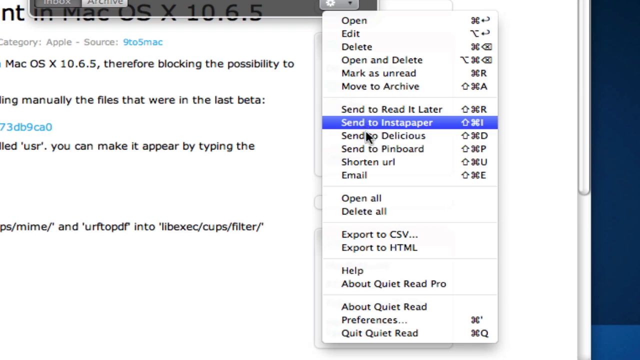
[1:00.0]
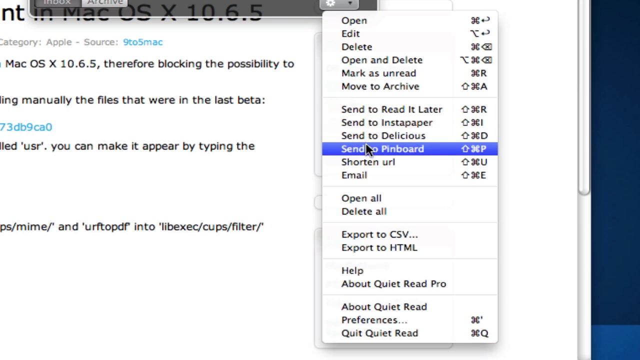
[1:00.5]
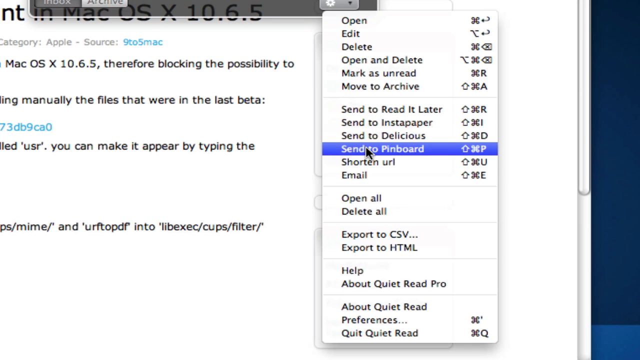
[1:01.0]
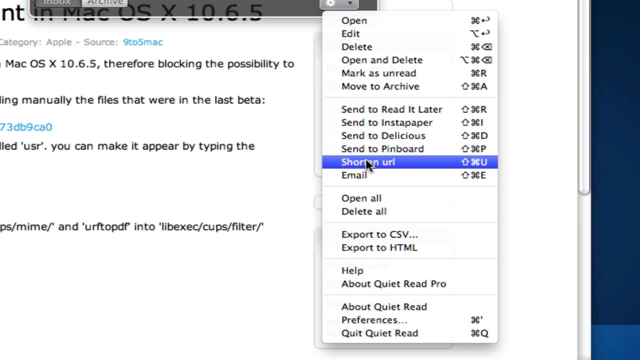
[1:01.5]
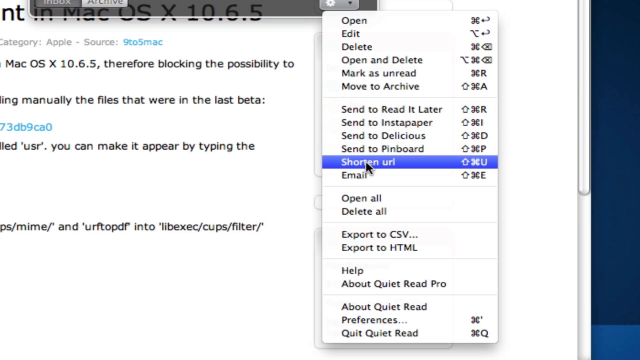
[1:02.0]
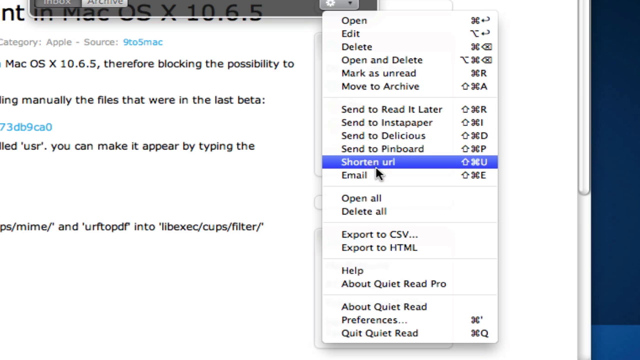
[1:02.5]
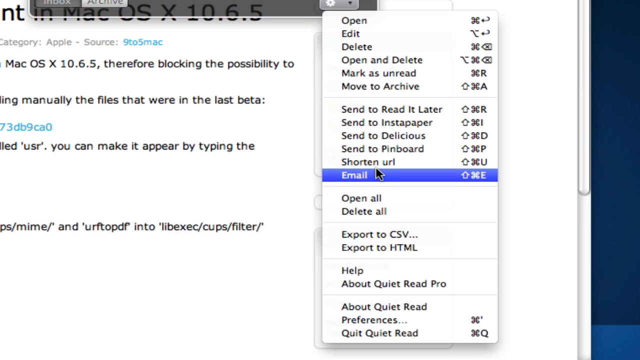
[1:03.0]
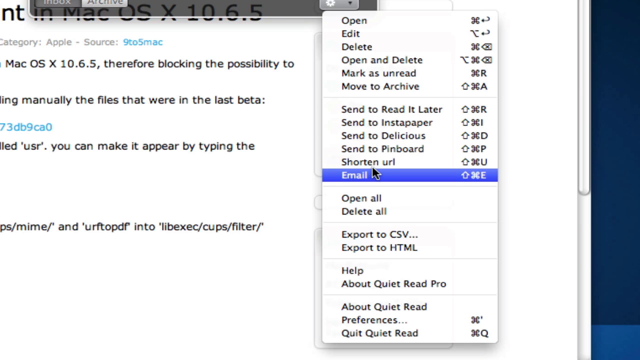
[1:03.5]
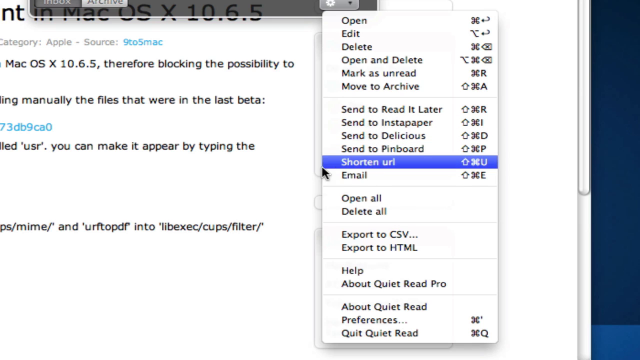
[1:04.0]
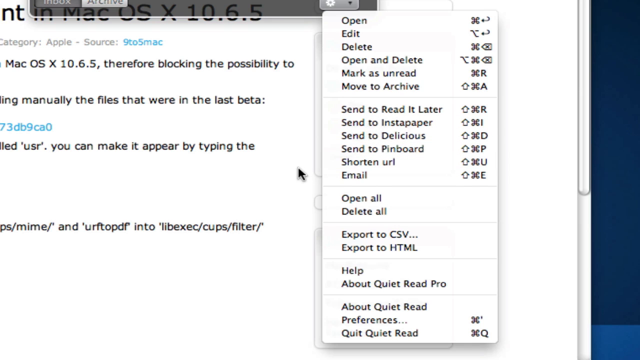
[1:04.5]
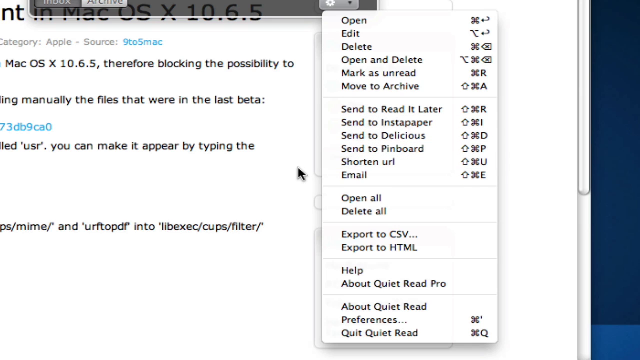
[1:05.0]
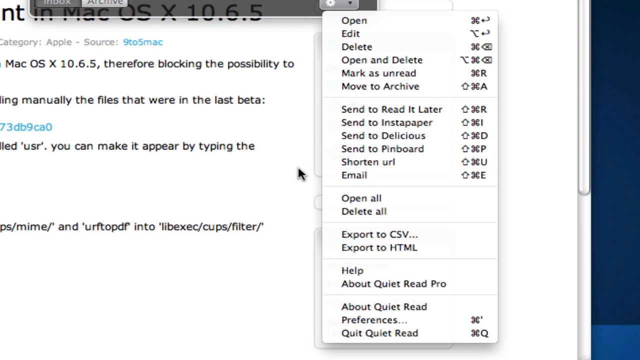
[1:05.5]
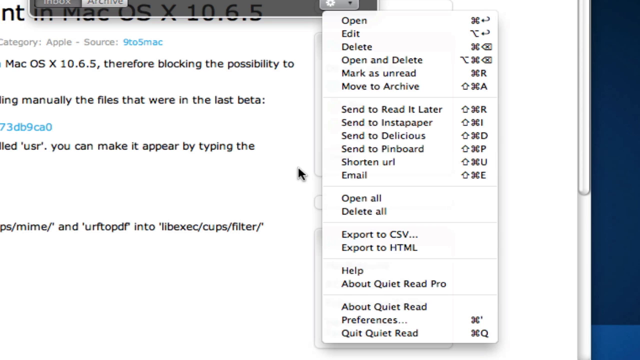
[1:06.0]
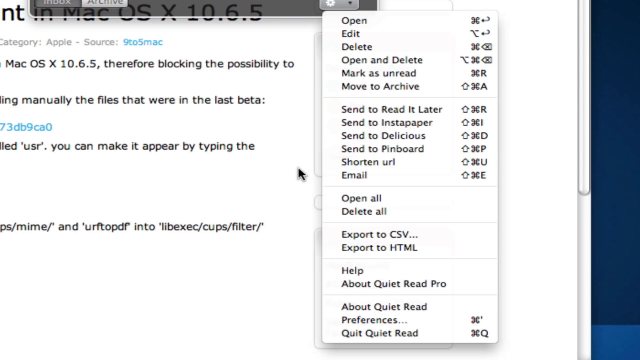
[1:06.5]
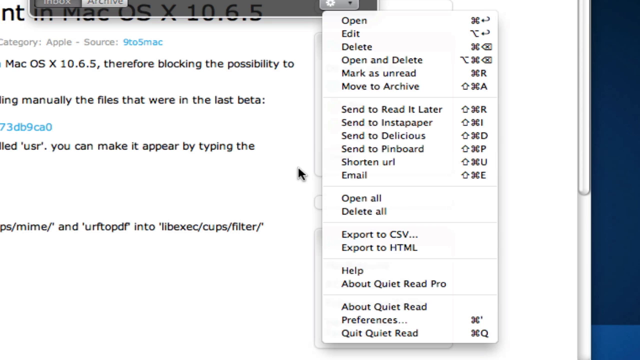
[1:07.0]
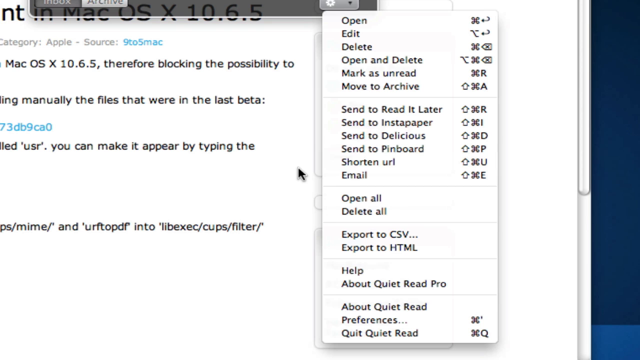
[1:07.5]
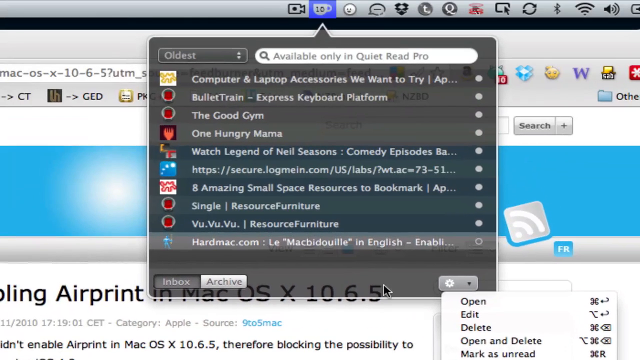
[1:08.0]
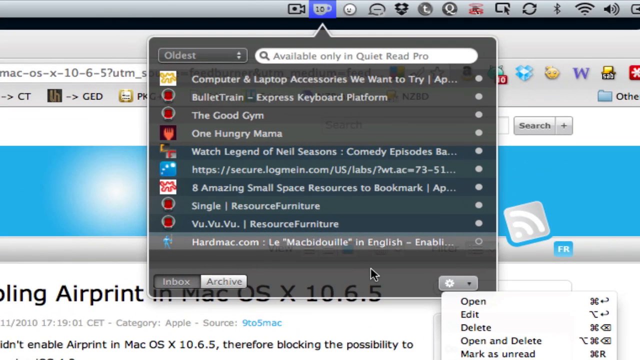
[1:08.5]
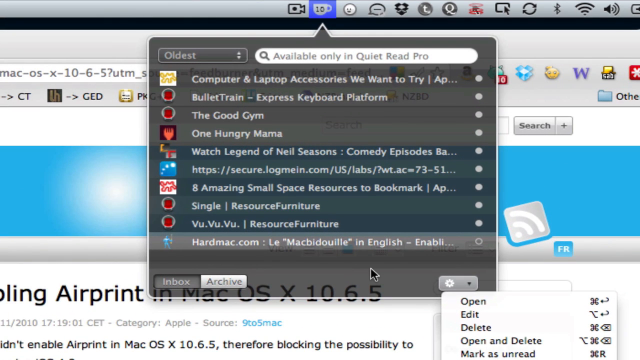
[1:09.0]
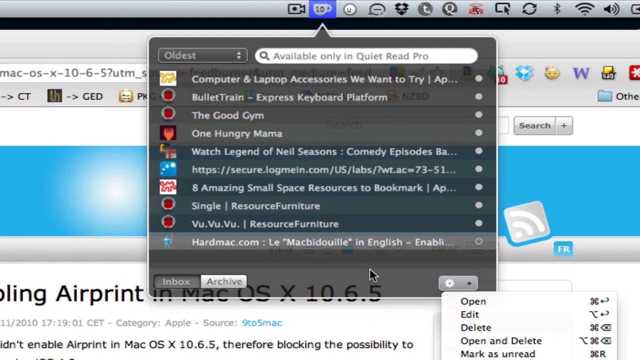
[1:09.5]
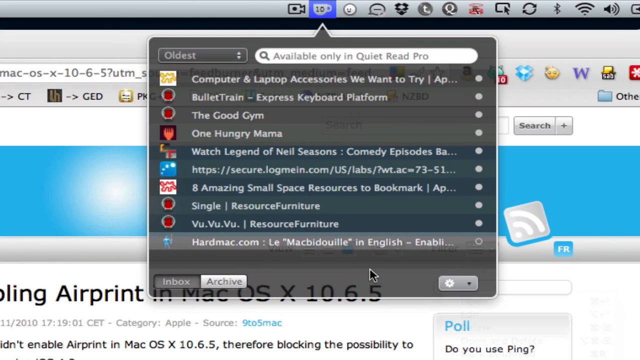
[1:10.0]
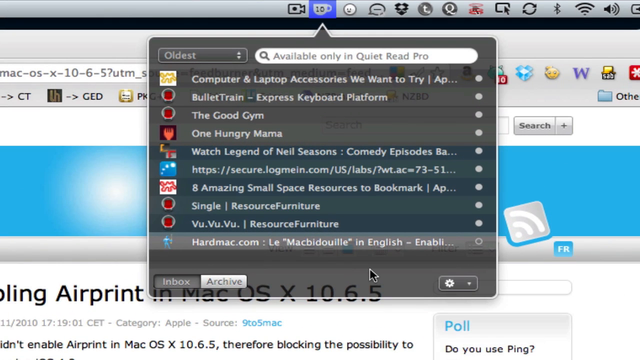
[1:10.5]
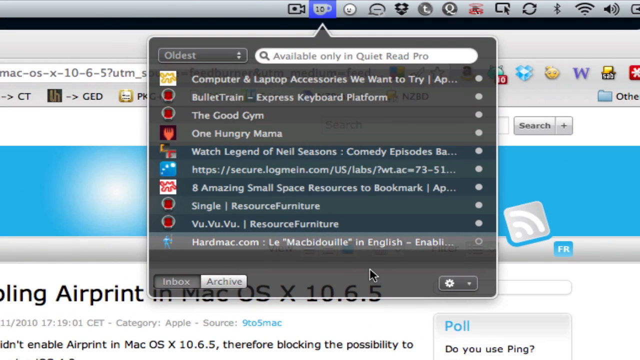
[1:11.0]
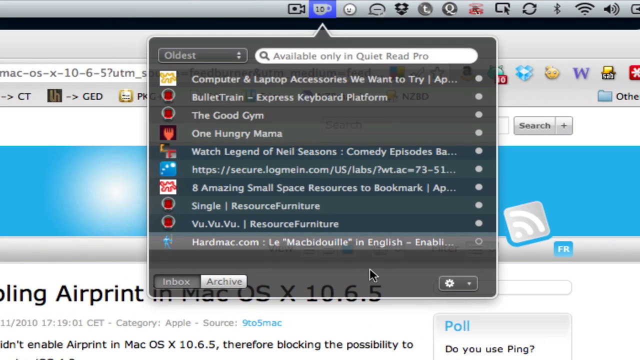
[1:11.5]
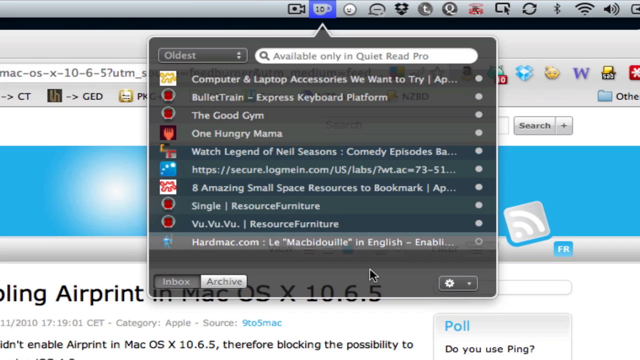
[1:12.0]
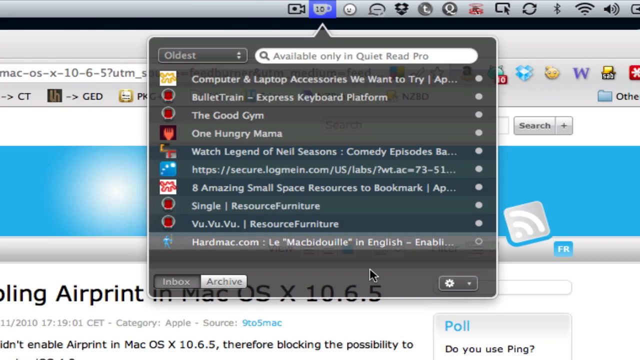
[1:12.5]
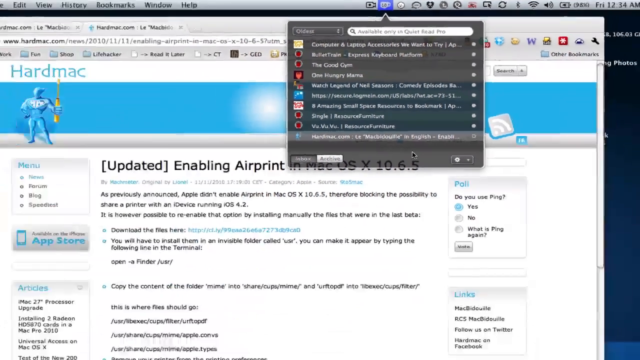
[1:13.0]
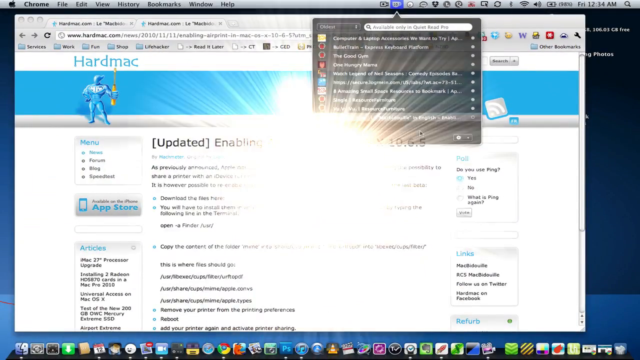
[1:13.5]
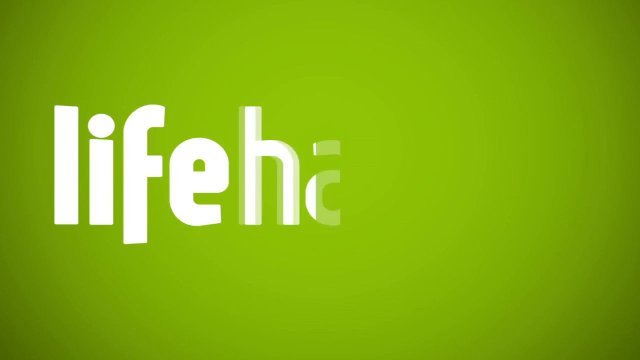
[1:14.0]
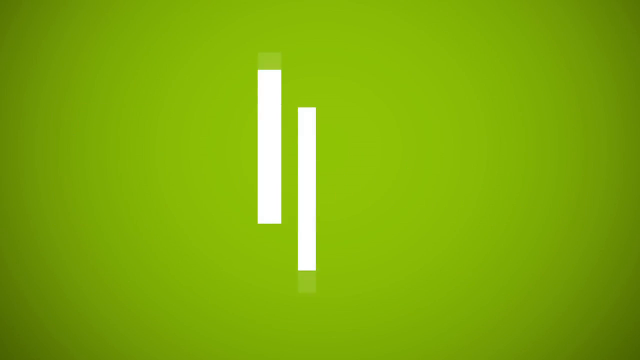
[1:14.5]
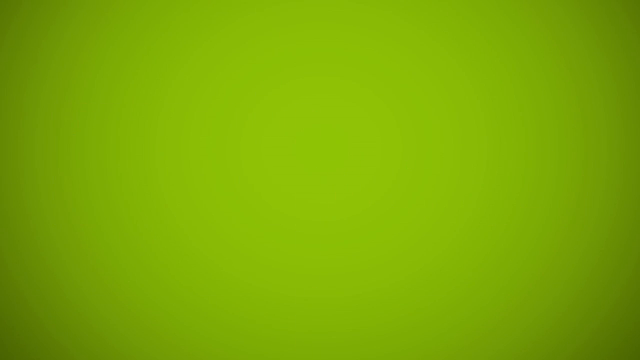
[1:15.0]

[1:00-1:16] The send to Delicious option is apparently started but then quit, and nothing is sent. A menu of sending options is shown, including shorten the URL and email, and then the screen goes back.